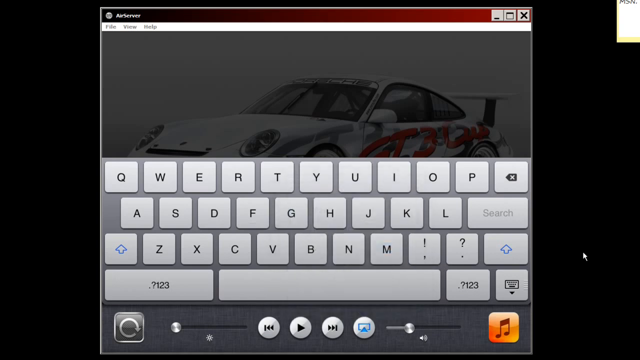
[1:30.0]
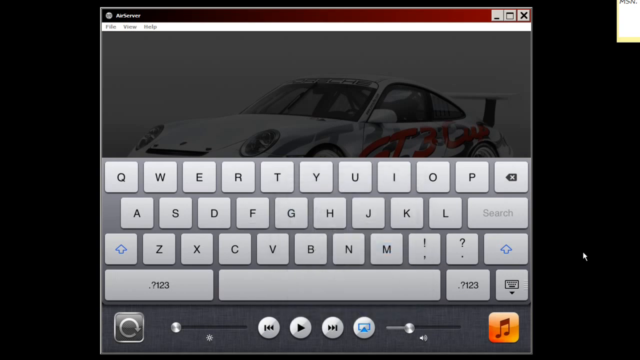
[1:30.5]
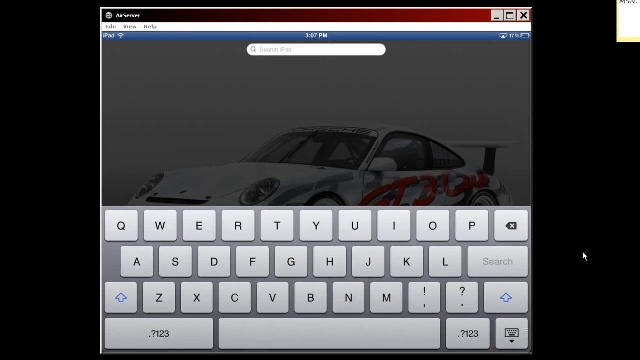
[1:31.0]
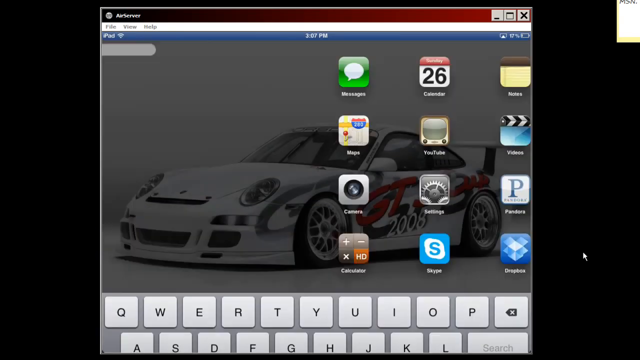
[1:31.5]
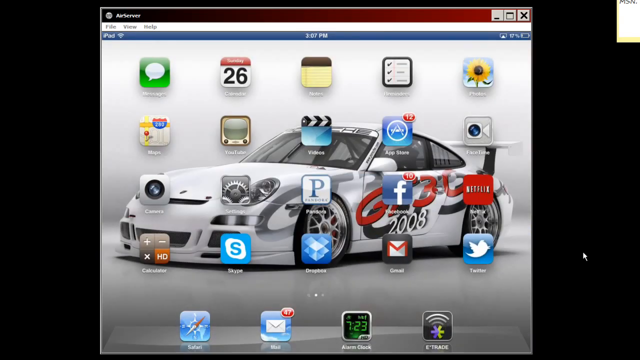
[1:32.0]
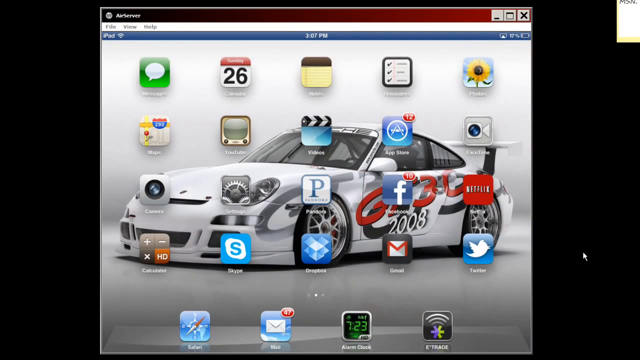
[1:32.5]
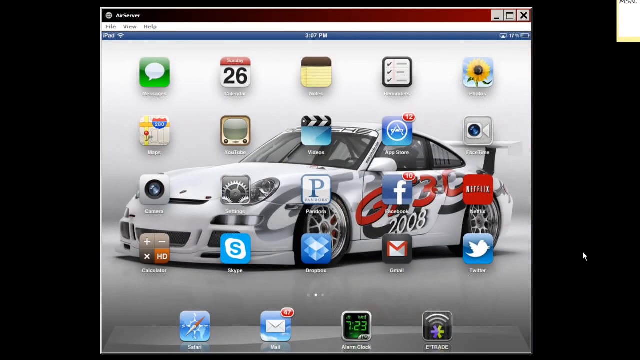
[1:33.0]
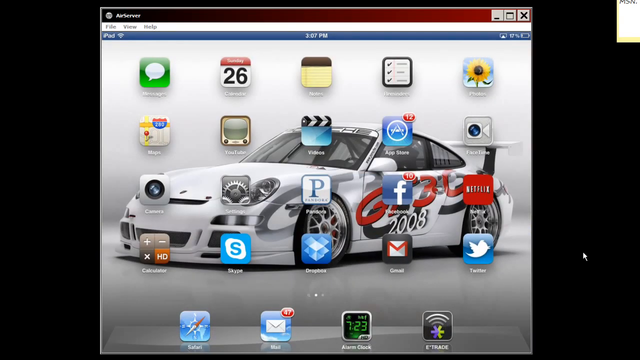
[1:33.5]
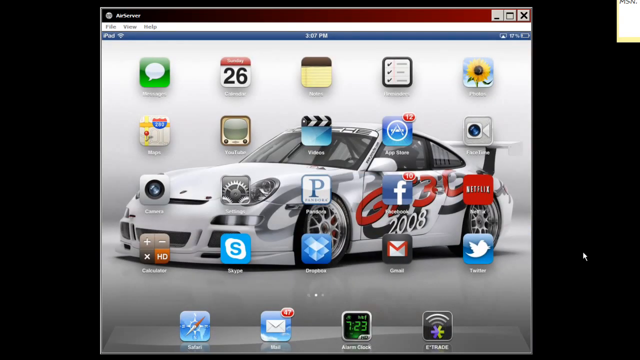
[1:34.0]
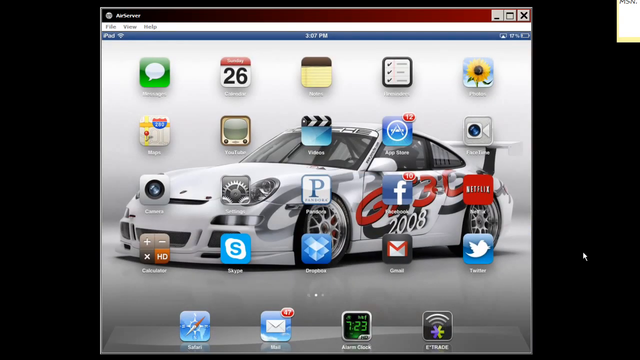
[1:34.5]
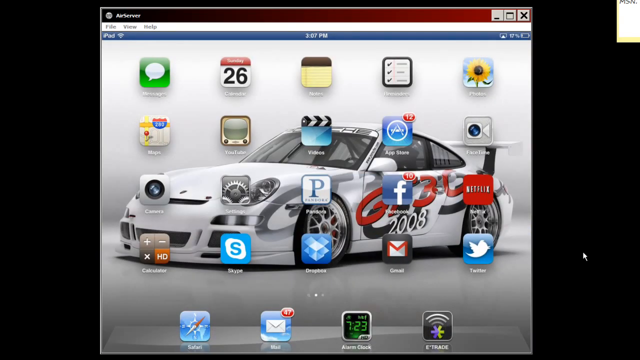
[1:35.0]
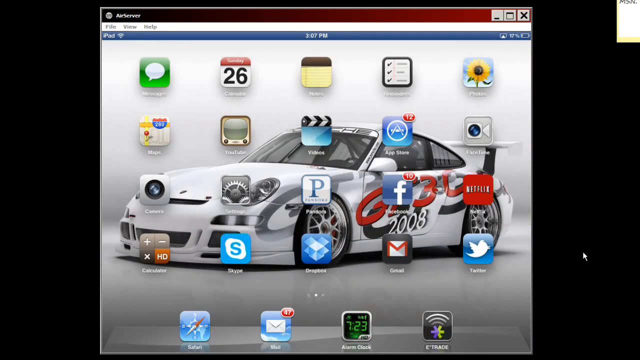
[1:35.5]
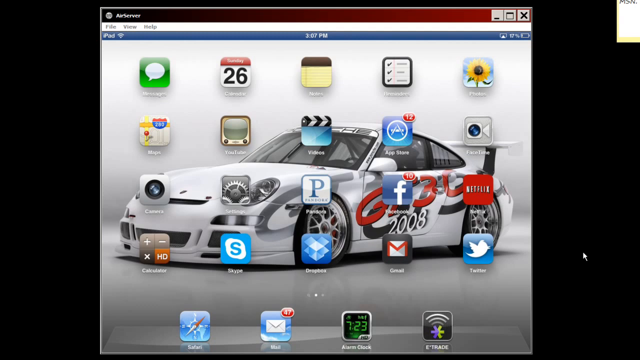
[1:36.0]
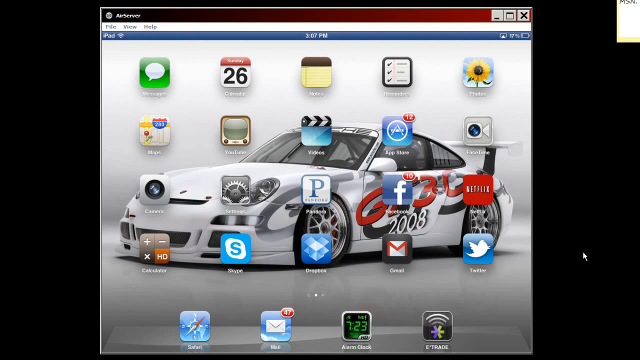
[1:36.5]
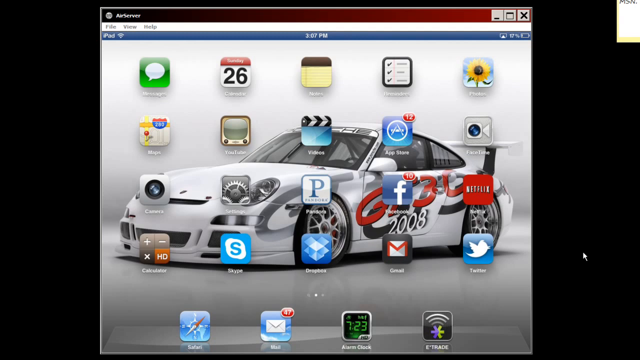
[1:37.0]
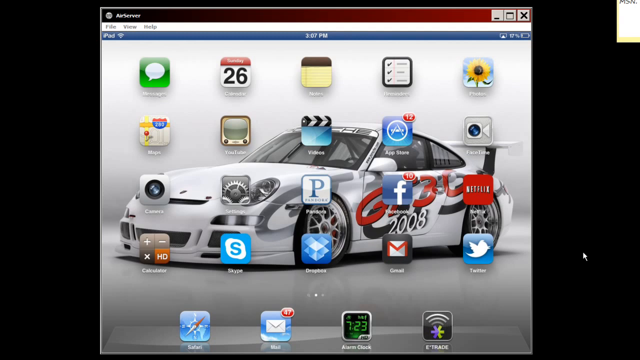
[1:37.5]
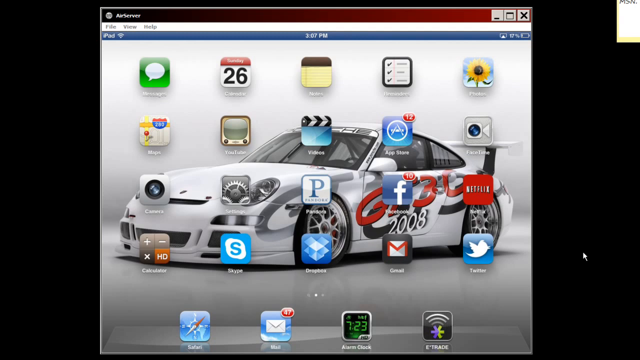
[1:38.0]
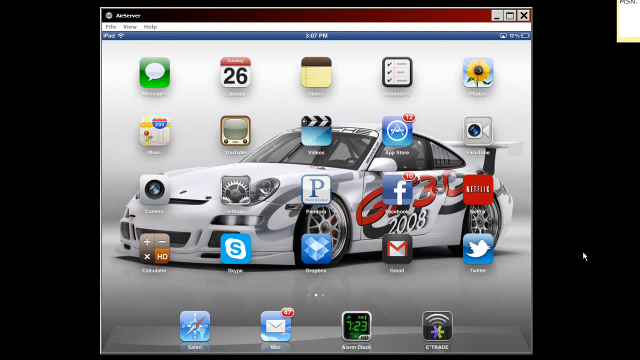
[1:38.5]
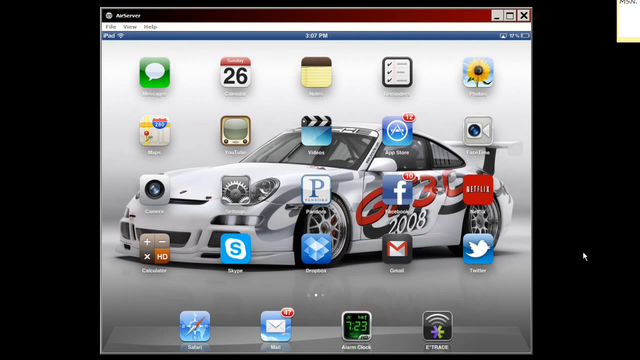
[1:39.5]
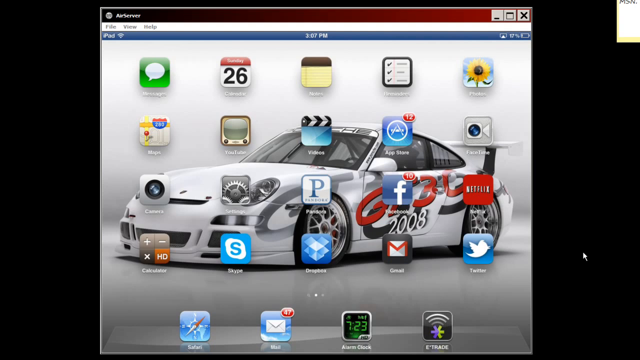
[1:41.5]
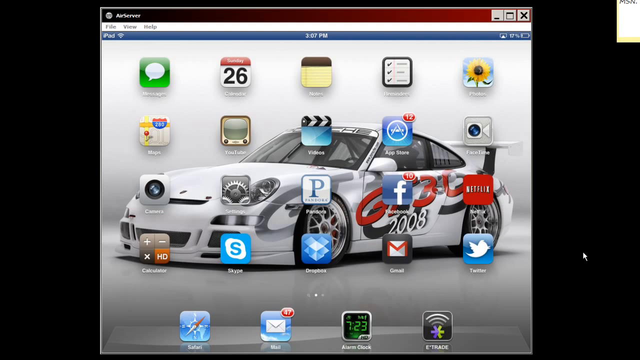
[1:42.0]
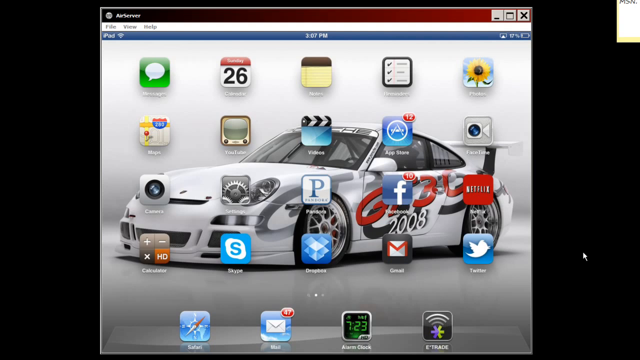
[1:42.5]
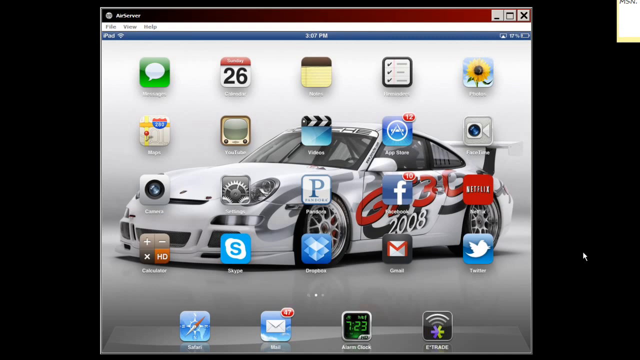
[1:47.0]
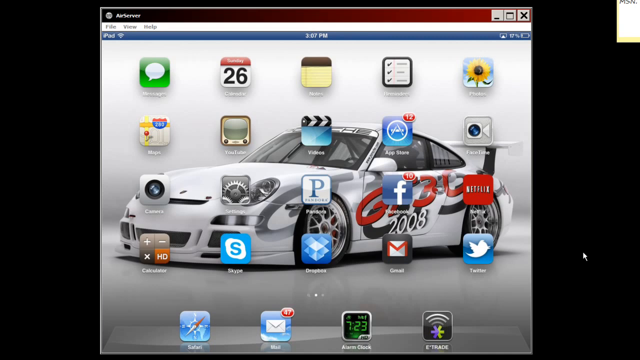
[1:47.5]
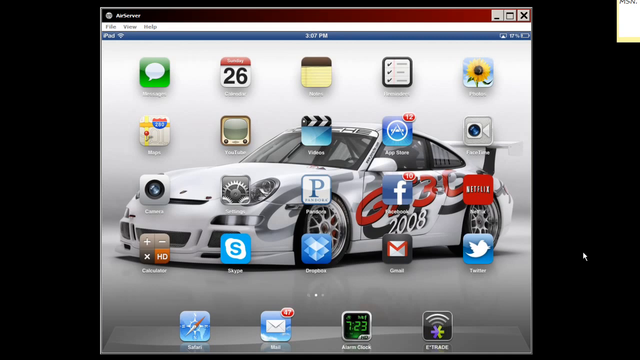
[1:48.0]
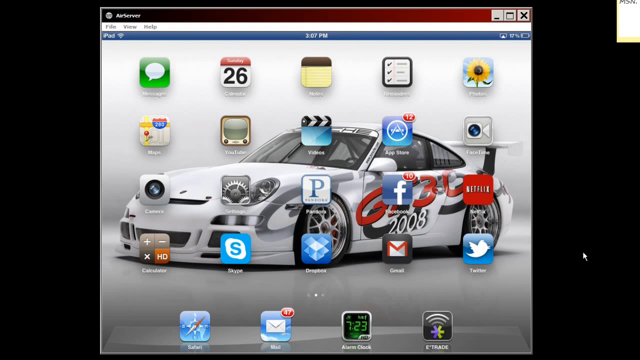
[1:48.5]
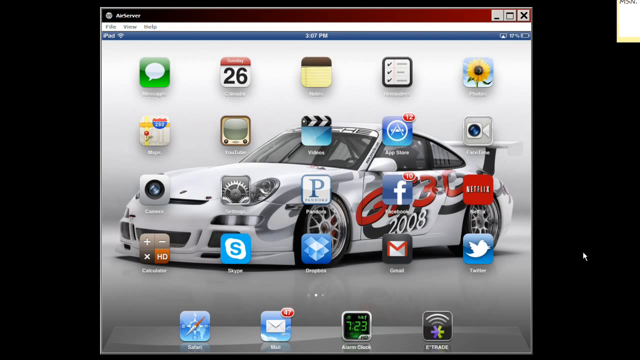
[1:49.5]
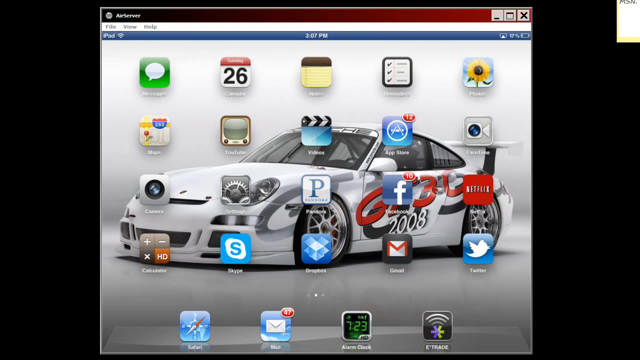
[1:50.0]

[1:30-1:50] The AirServer box is open on the computer against the black background, with the white sports car in the background and the keyboard up, covering half the screen, above a section with what seem to be music, play, skip and volume controls at the bottom. The keyboard and volume section disappear, revealing all the iPad apps overlapping the image of the sports car. There is no movement for the rest of the shot. The apps, arranged fairly neatly in rows over the car, include Messages, Calendar, Notes, Reminders, Photos, FaceTime, the App Store, Videos, YouTube with a very old logo resembling a brown television box, Maps, Camera, Settings, Pandora, Facebook, Netflix, Twitter, Gmail, Dropbox, Skype and Calculator, with Safari, Mail, Alarm Clock and what looks to be an E-Trade app in the bottom row.